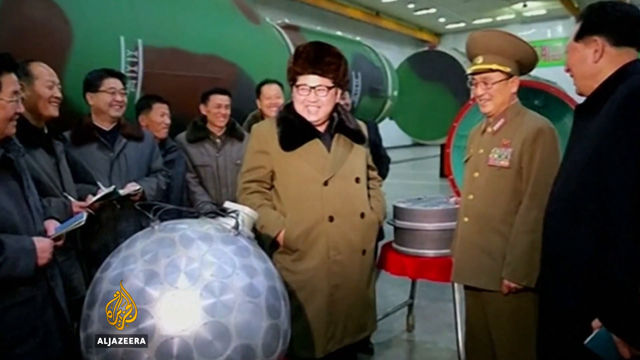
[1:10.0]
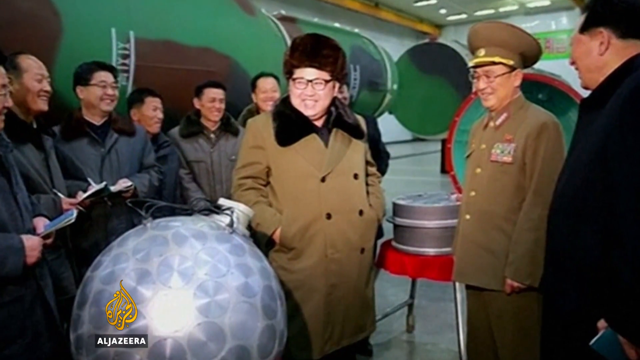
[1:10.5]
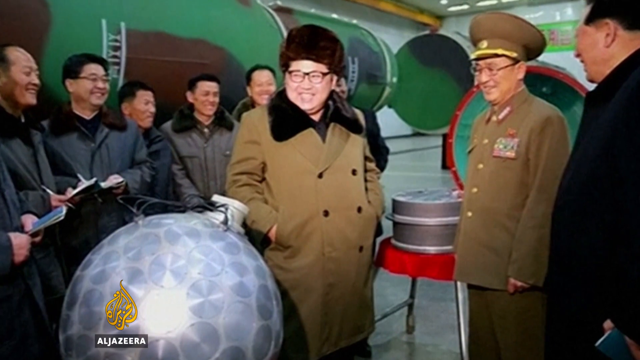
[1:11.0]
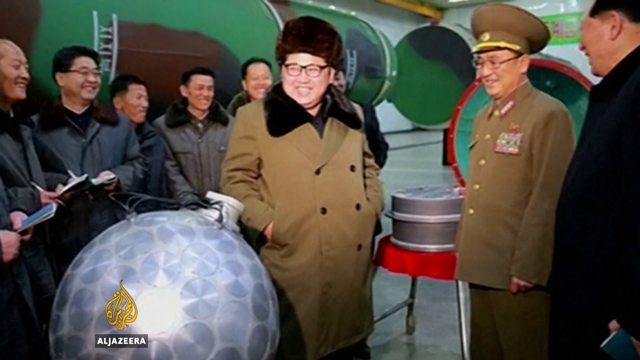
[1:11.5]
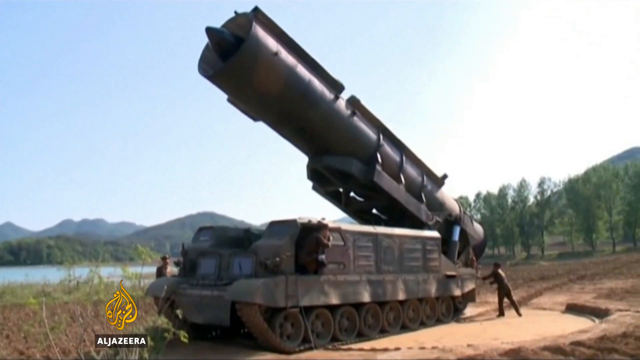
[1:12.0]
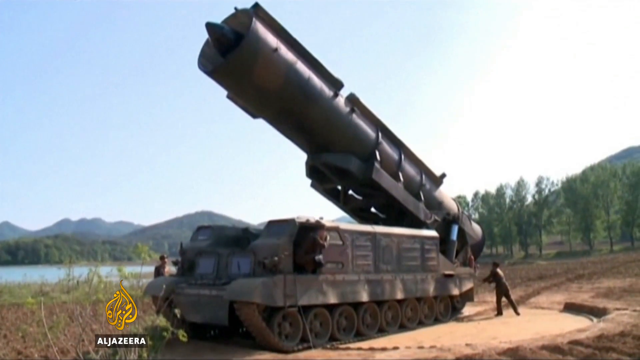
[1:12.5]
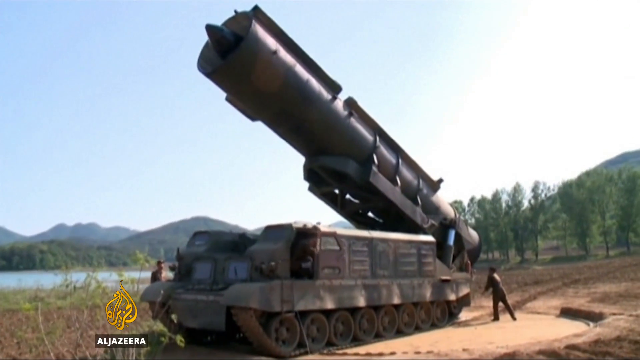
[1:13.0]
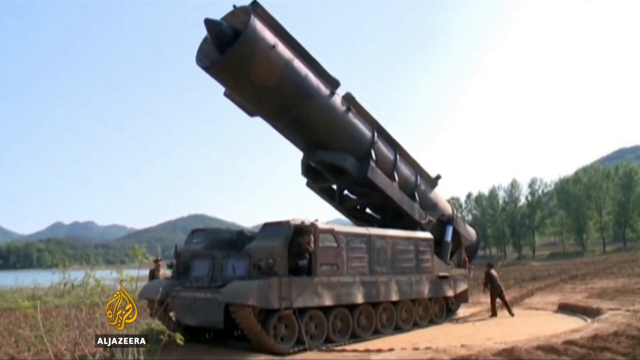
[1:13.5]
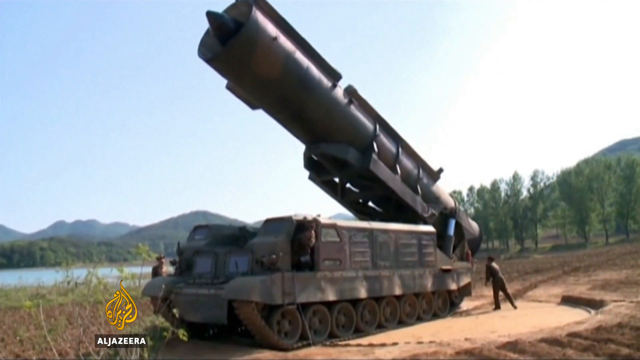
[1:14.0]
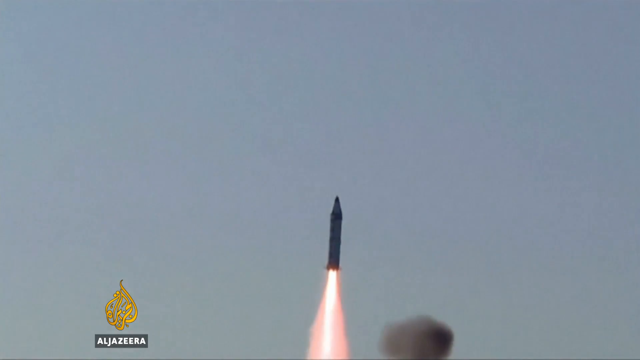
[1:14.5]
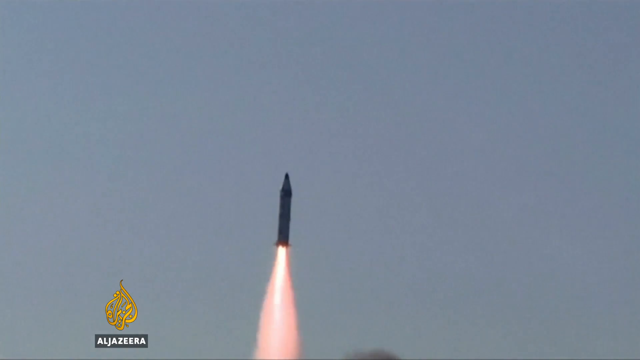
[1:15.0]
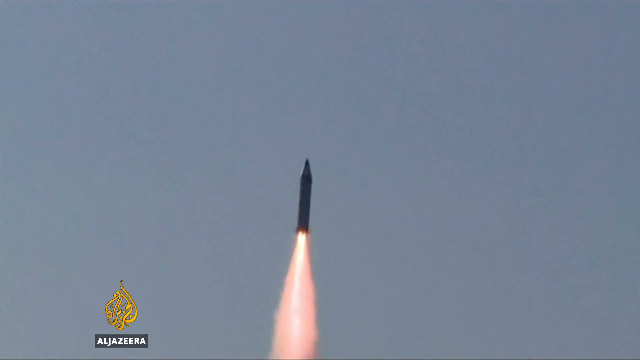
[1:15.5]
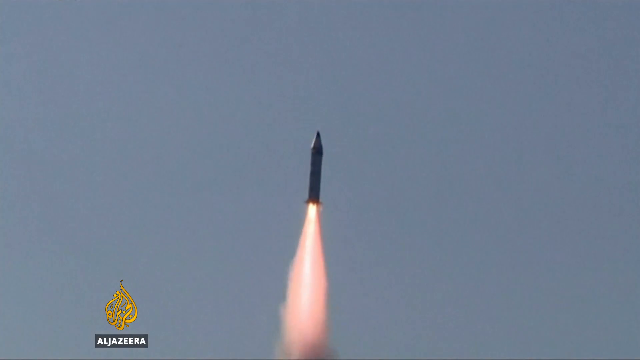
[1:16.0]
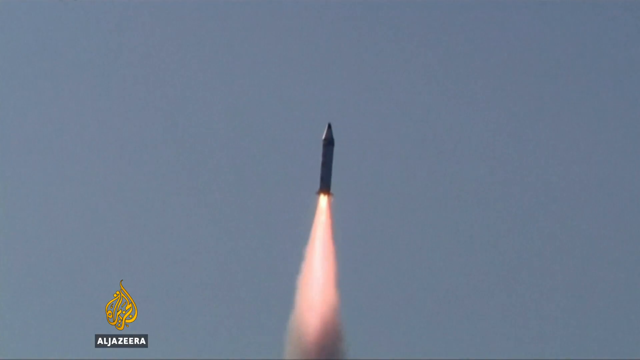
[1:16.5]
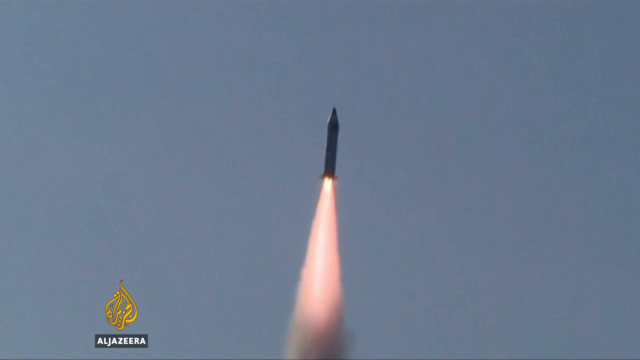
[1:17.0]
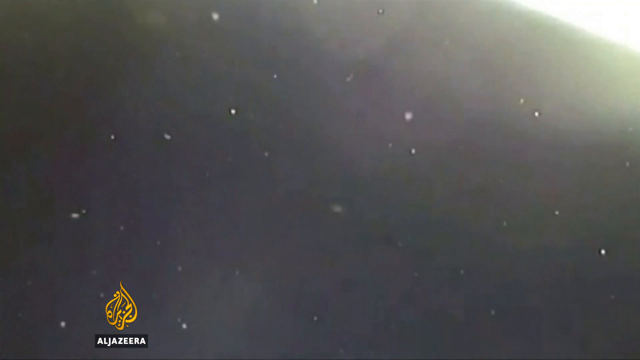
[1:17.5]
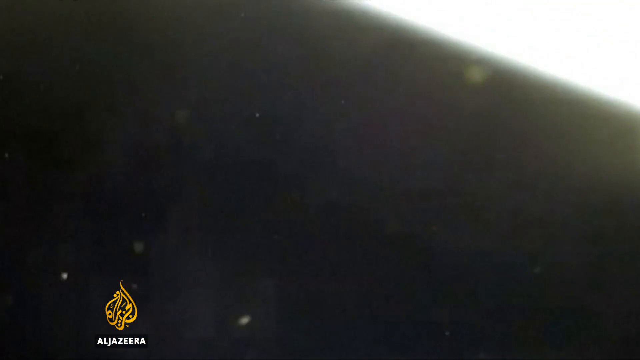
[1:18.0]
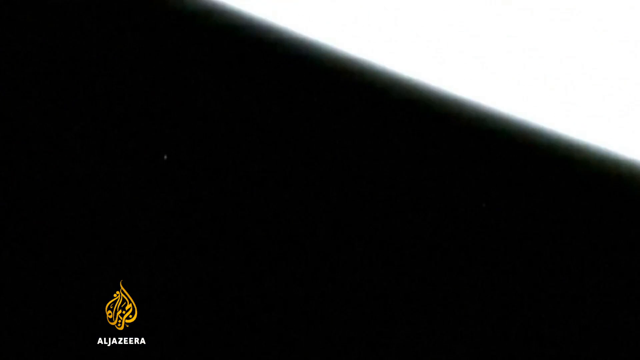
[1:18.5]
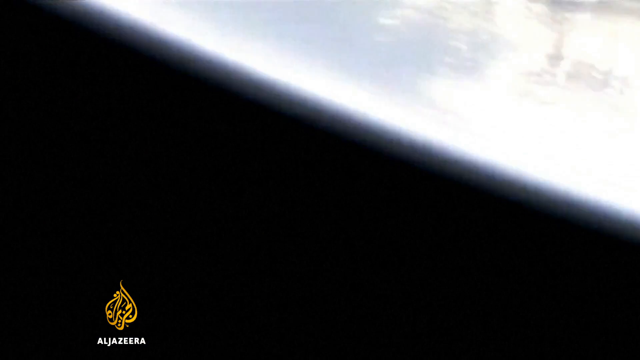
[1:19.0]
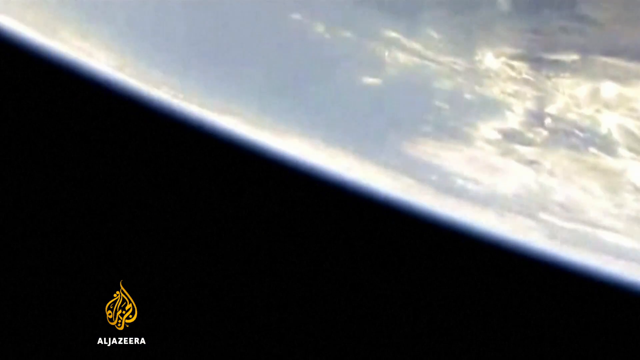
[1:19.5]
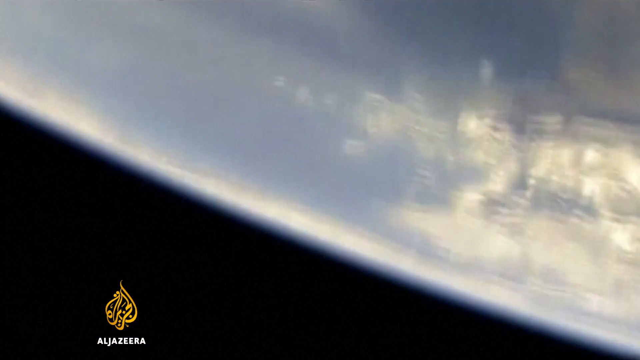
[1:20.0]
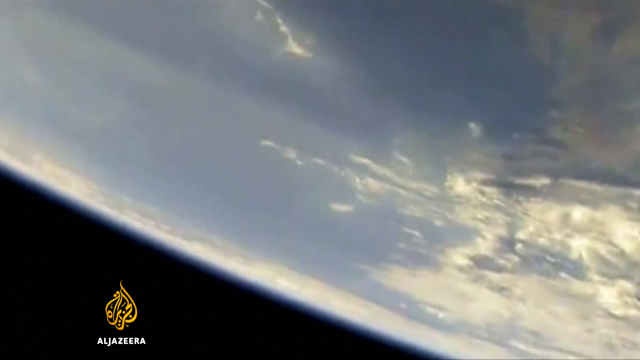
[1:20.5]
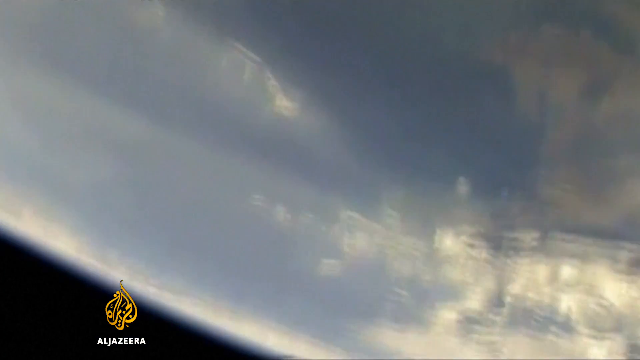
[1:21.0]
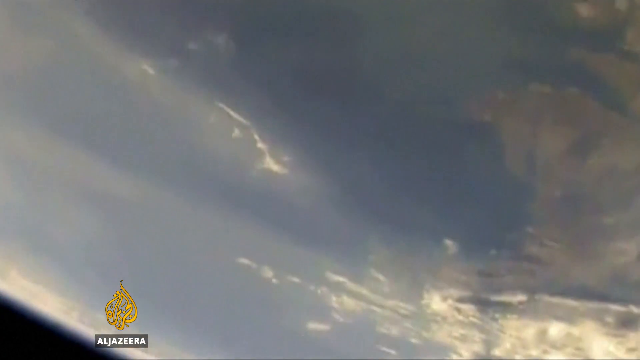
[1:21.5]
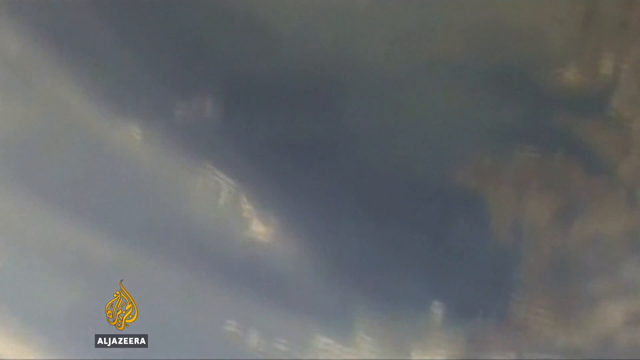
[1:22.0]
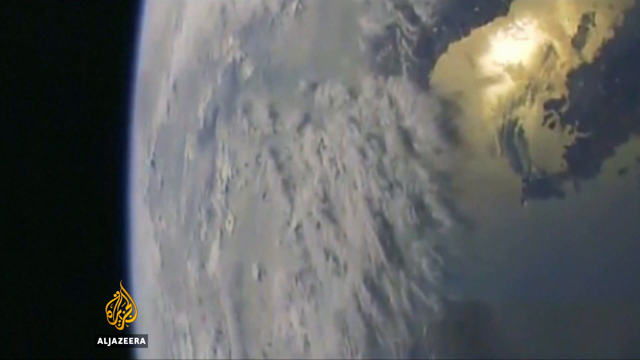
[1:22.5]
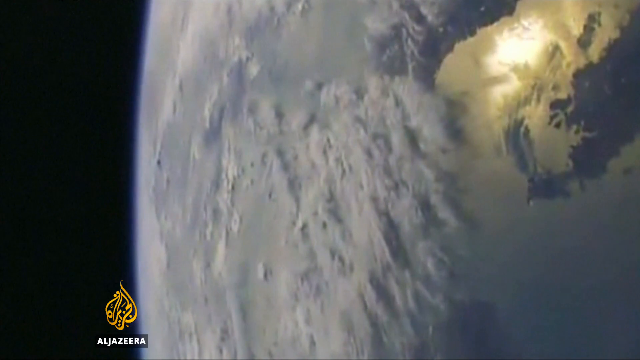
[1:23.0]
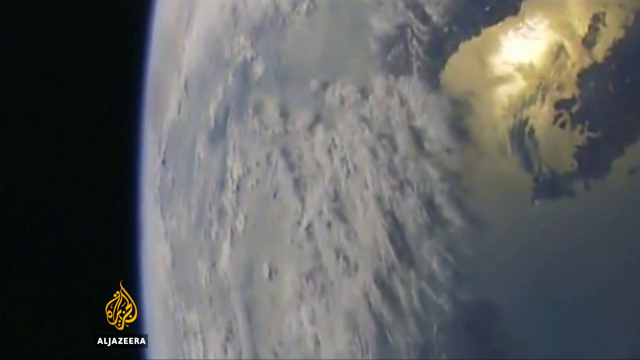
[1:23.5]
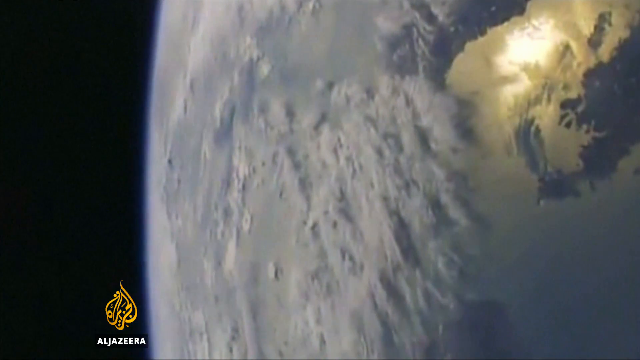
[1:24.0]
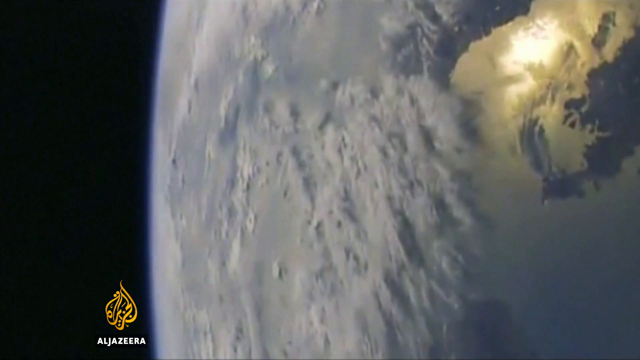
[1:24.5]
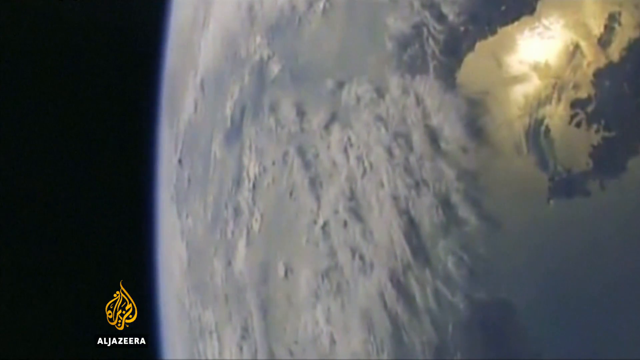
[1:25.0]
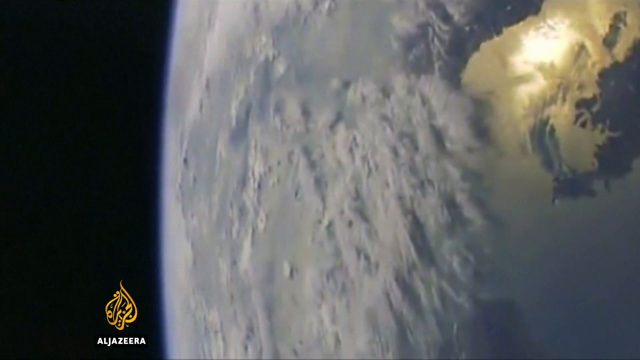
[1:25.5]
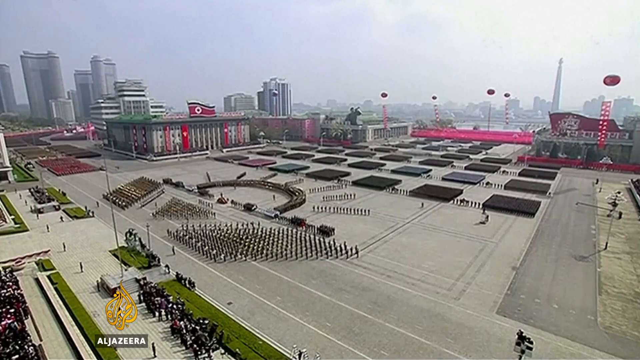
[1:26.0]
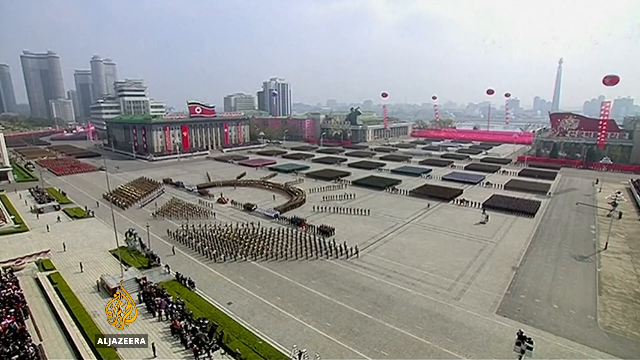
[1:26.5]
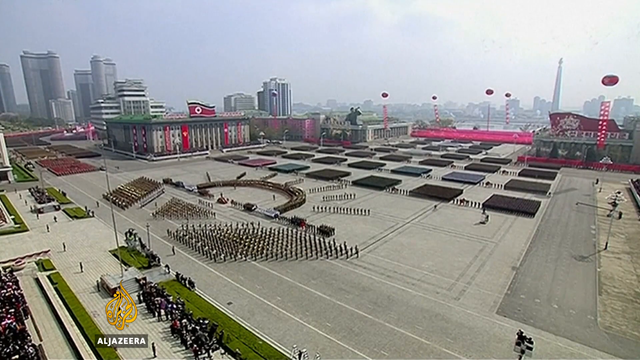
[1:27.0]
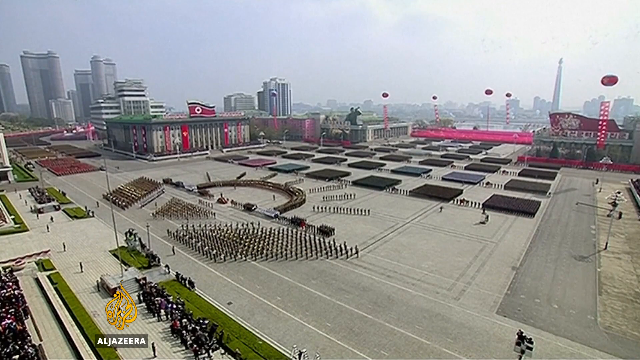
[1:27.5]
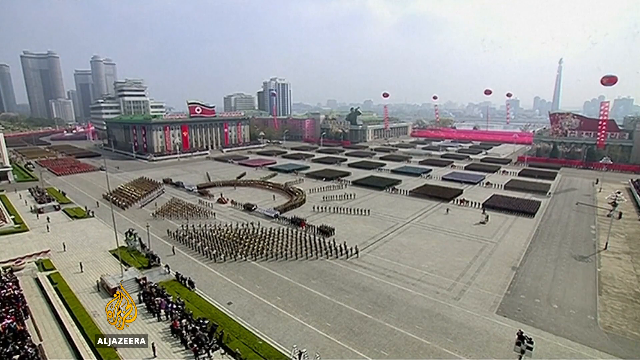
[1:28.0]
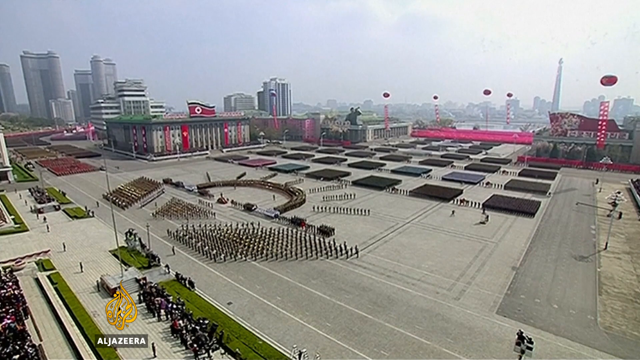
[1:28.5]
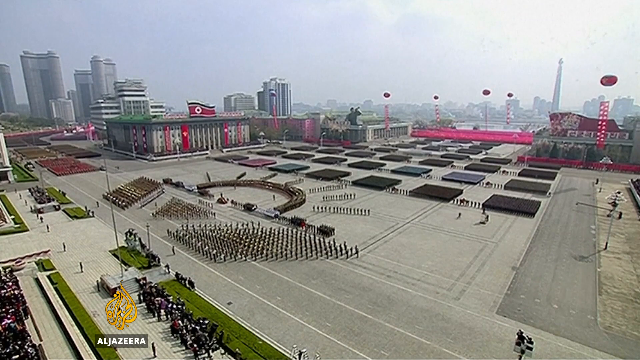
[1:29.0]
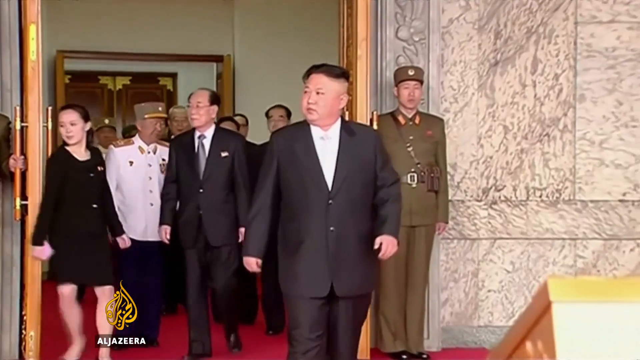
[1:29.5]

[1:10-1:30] A man in a black hat, a brown coat and glasses smiles with his hands in his pockets. Next to him is a man in a brown army uniform and a hat. In front of him is a round, silver ball-like object, and behind him a few men smile while looking at him. An army car that looks like it is for launching rockets is shown in a forest, with a river, a few trees and some mountains visible. A rocket launches up into the sky, and then the earth is seen from space. Next comes what seems to be a city with many men down the street, one of them running. A man in a black suit and a white shirt walks out of a building, with a few men in white army uniforms behind him.